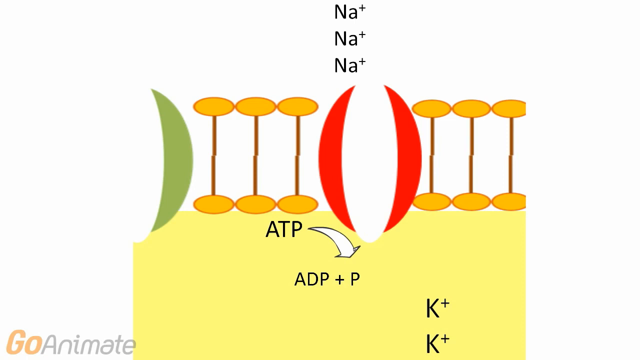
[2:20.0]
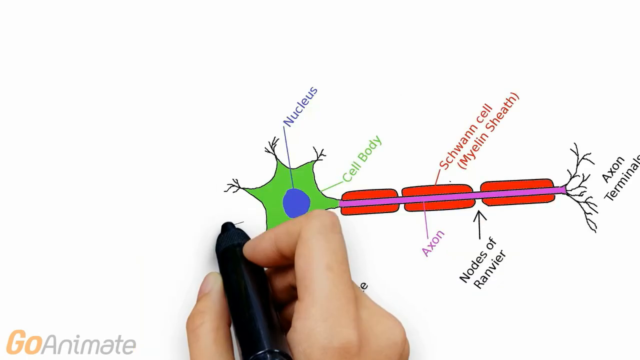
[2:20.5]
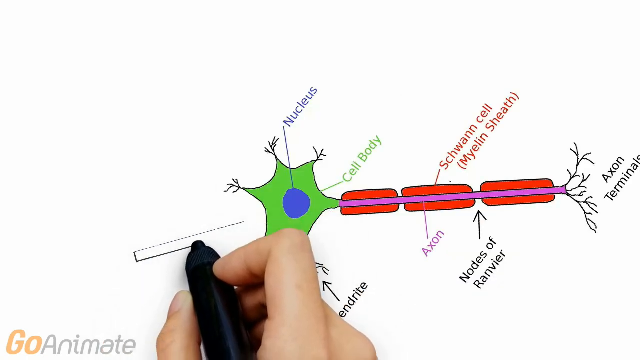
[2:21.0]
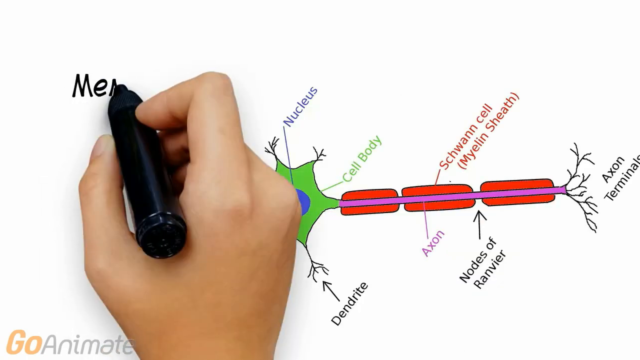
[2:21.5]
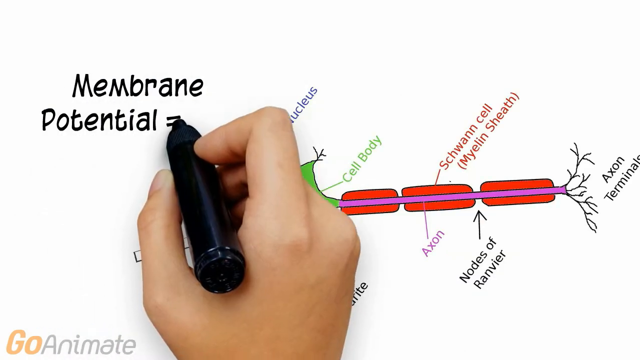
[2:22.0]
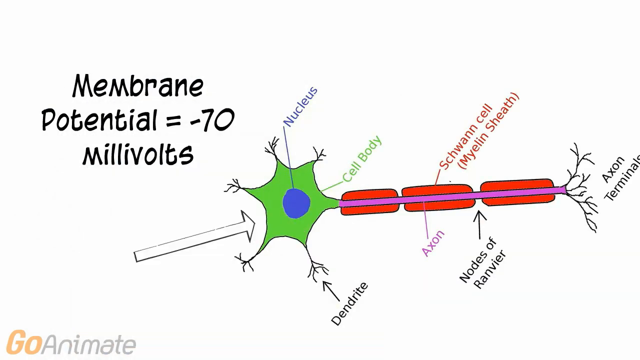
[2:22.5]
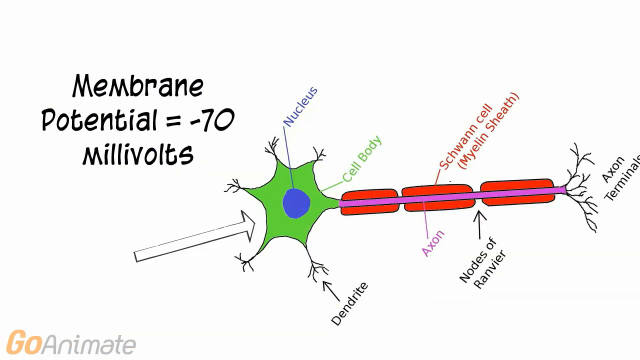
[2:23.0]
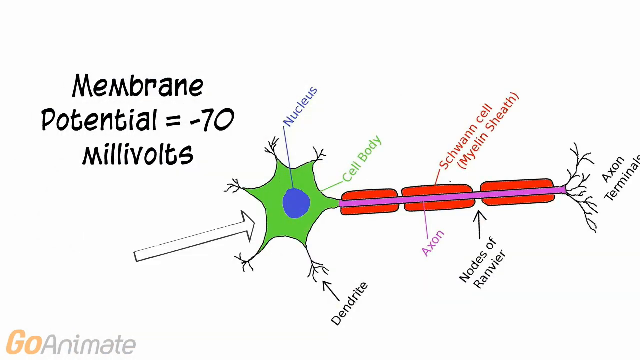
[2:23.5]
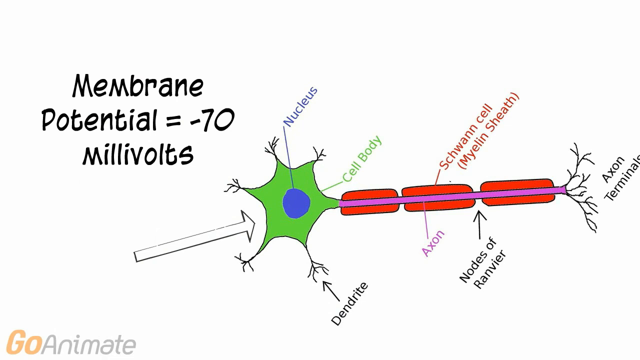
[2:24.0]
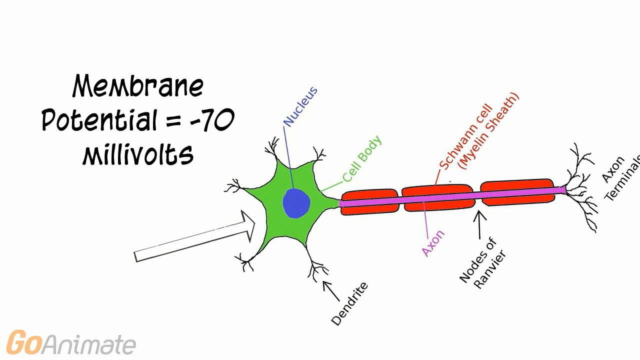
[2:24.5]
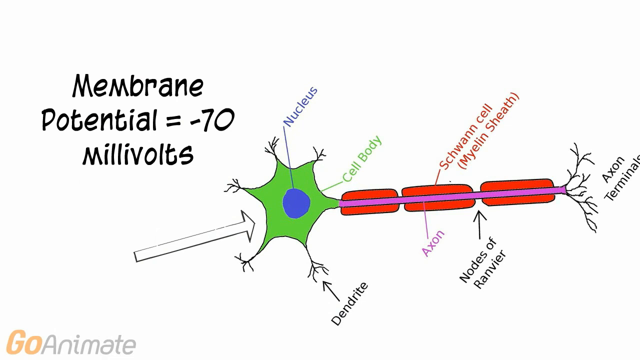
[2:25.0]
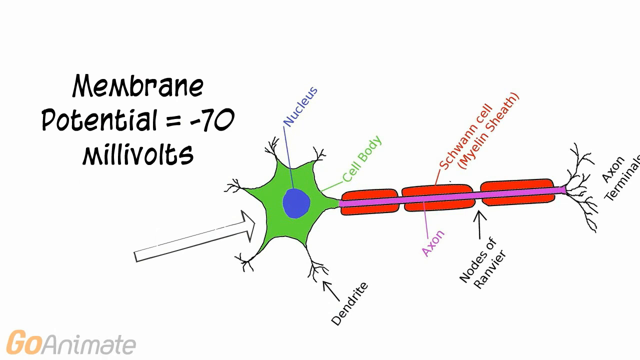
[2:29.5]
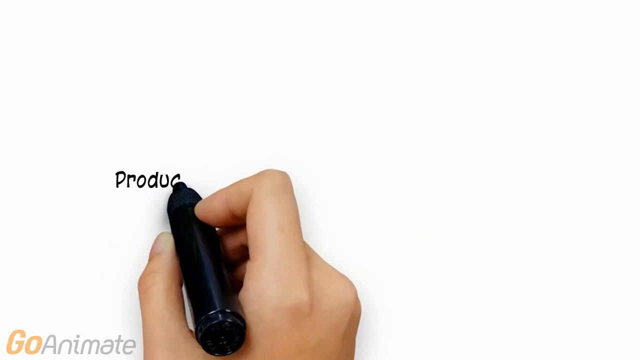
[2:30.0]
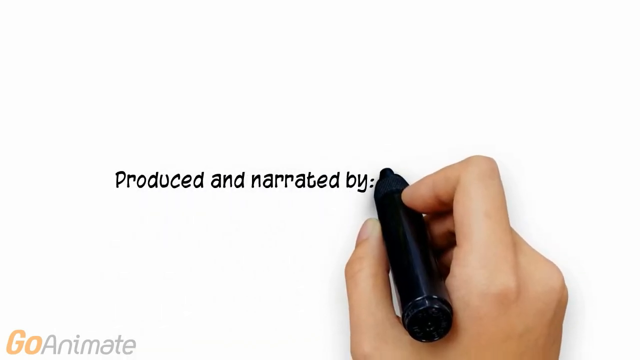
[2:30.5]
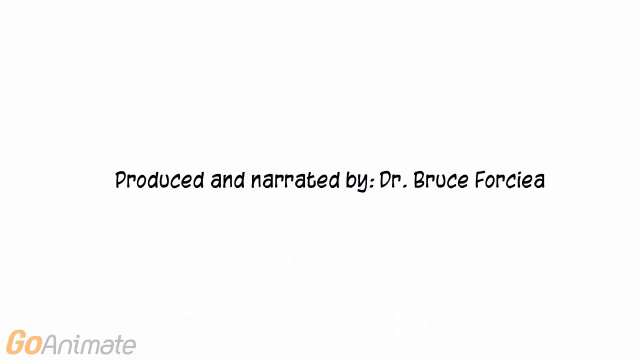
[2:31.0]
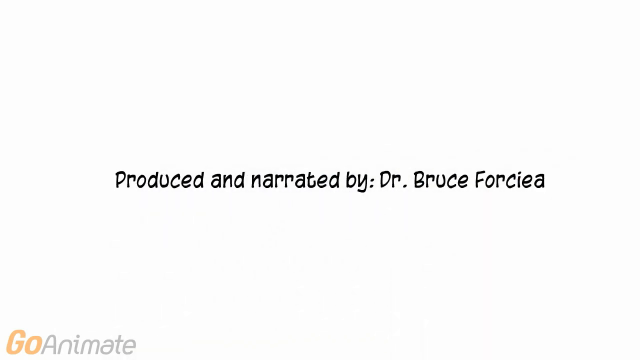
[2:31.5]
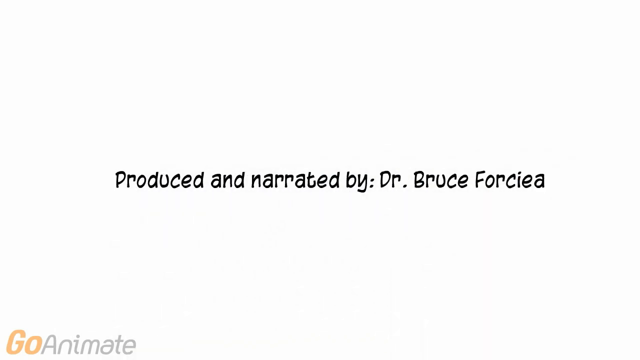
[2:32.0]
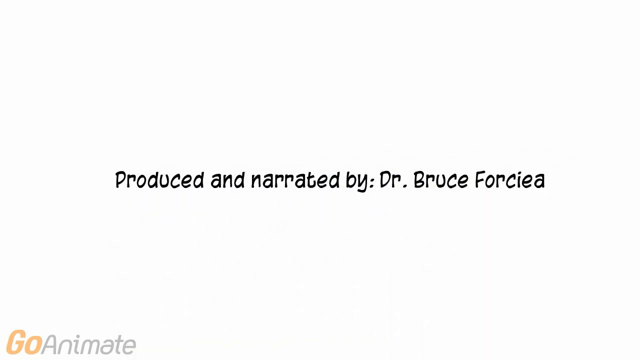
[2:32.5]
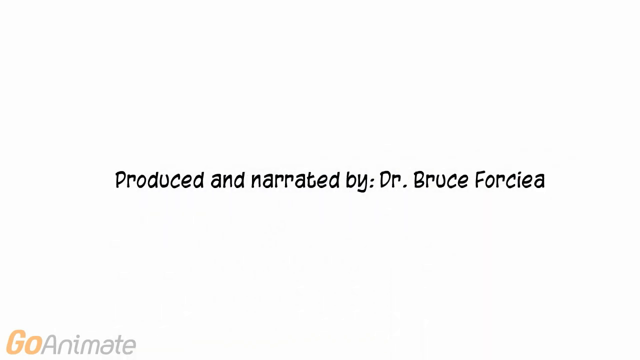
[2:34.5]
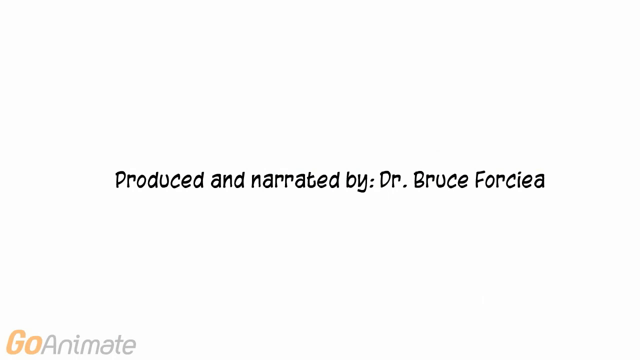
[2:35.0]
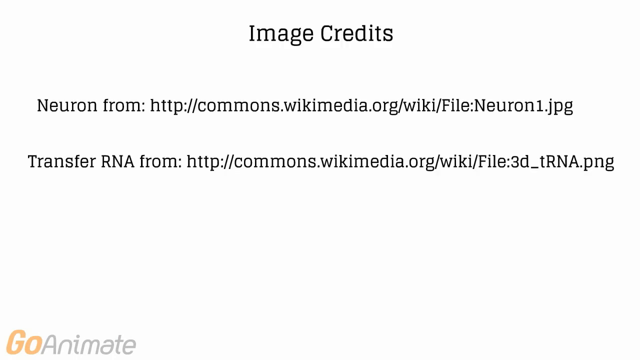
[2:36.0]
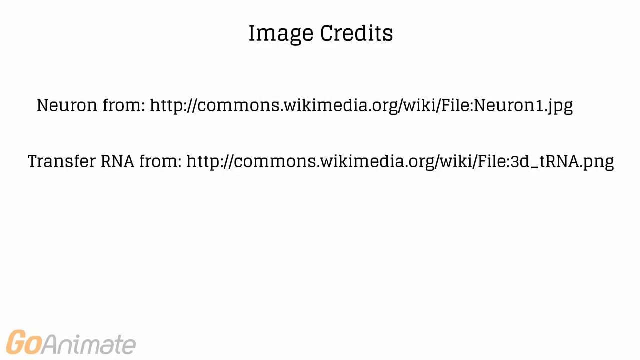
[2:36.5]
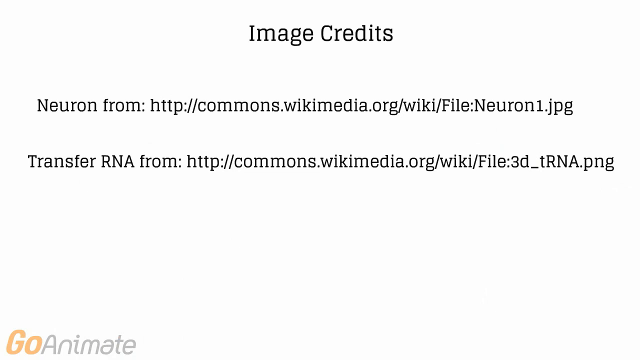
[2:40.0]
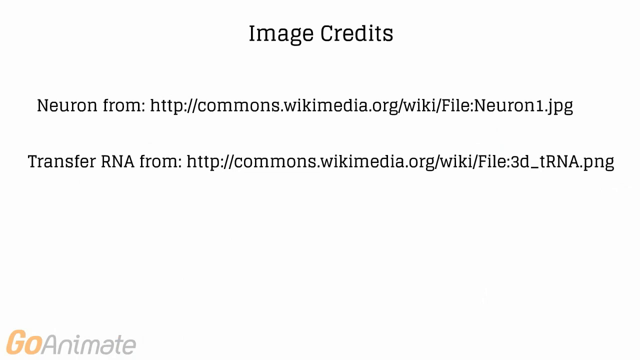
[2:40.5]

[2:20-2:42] A partial illustration of the neuron flashes by briefly, showing the yellow rectangular inside, with three sodium molecules having moved up through it to the outside and a single potassium molecule having moved back down into the inside. The full neuron image returns: the green star-shaped cell body at the top with a blue nucleus, the red myelin sheaths going down around the axon, the axon terminal, and labeled dendrites. The hand with the black pen draws an arrow toward the cell body and writes "membrane potential equals negative 70 millivolts." The image changes to a white screen where the hand writes in black pen "produced and narrated by Dr. Bruce Forciea." Image credits follow, reading "neuron from http://commons.wikimedia.org/wiki.file:neuron1.jpeg" and, at the bottom, "transfer RNA from http://commons.wikimedia.org.wiki.file:3D_tRNA.png."